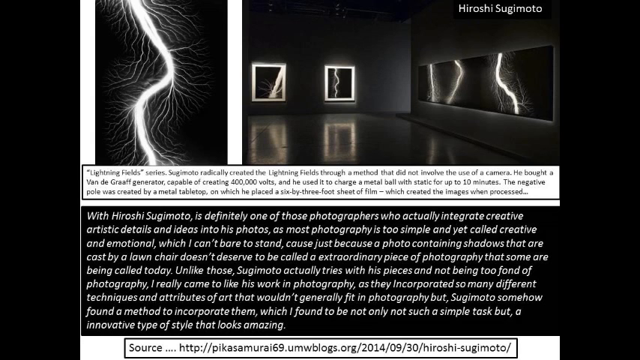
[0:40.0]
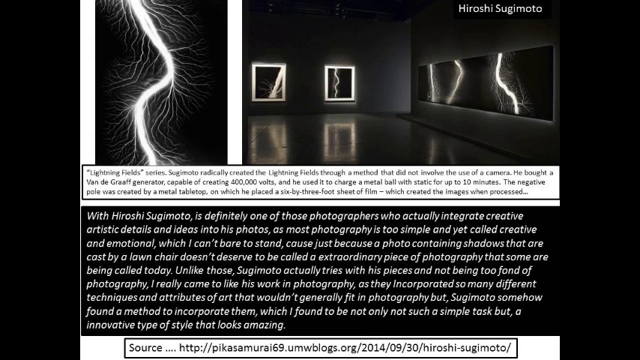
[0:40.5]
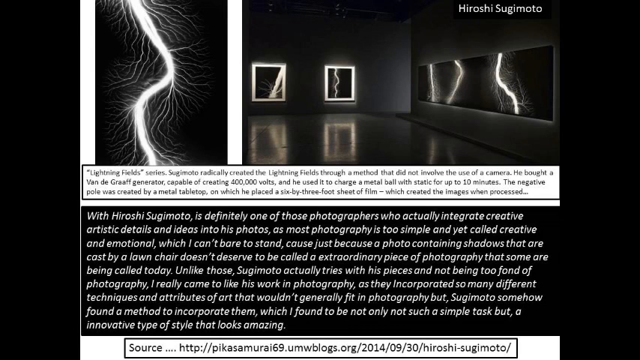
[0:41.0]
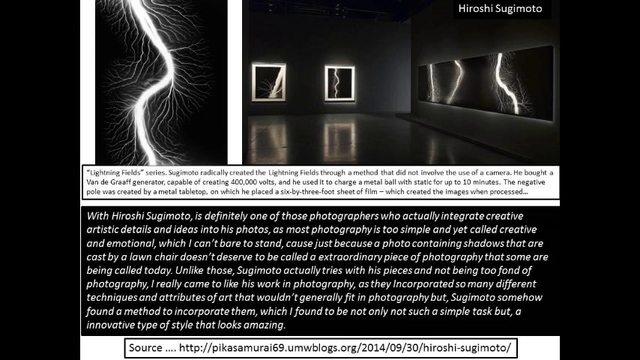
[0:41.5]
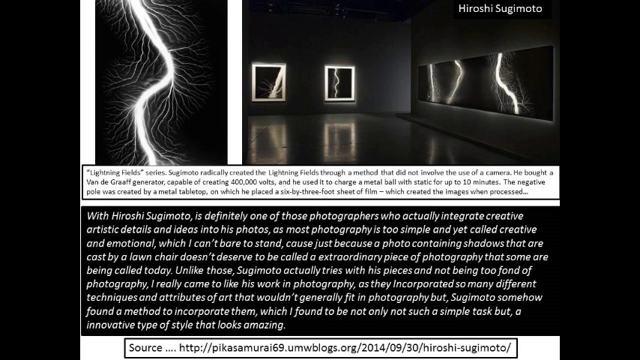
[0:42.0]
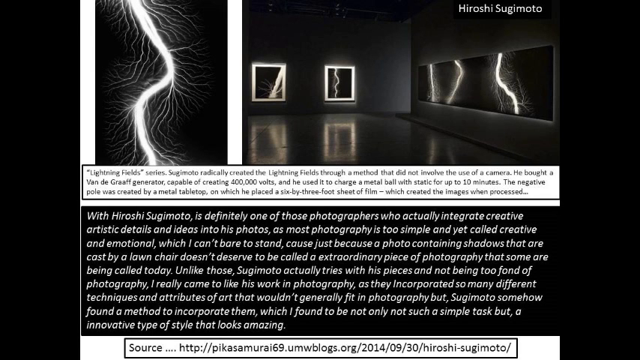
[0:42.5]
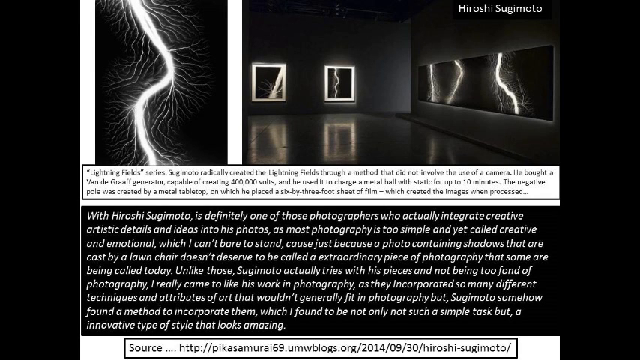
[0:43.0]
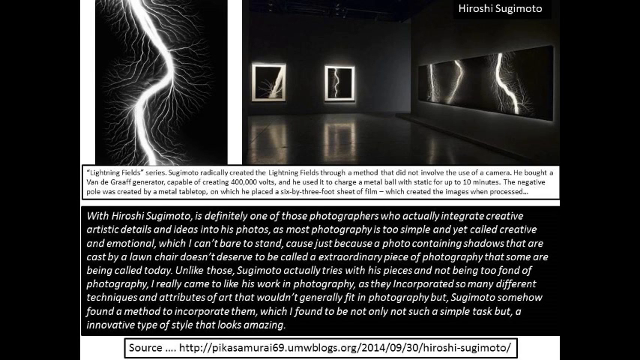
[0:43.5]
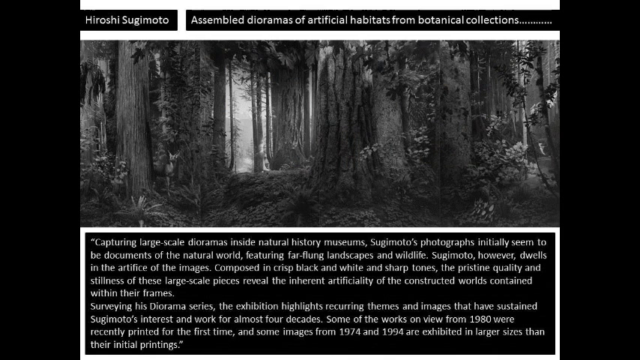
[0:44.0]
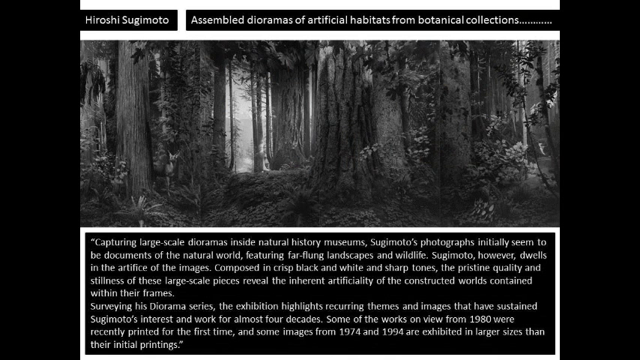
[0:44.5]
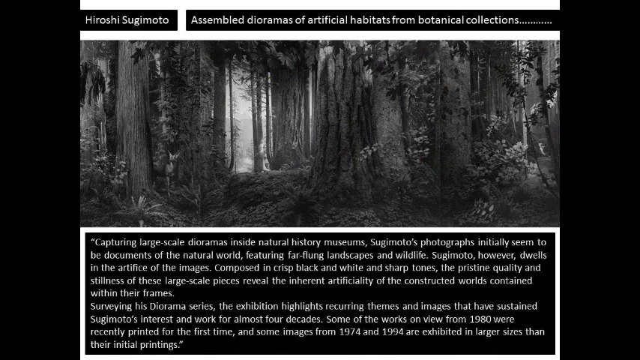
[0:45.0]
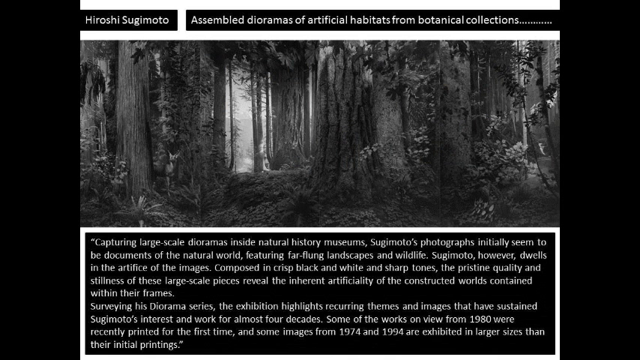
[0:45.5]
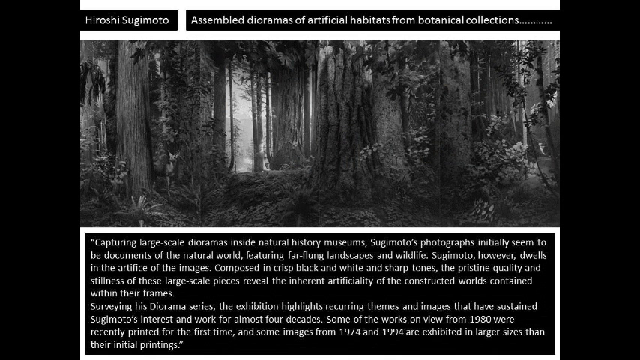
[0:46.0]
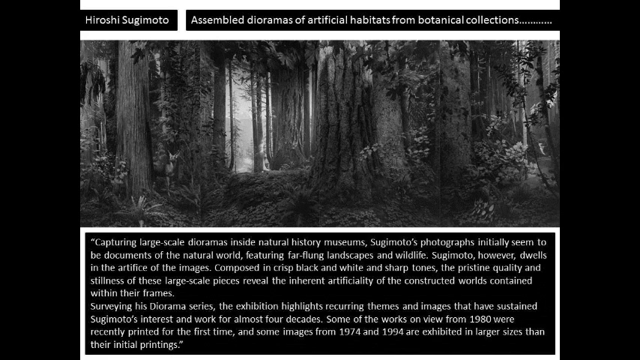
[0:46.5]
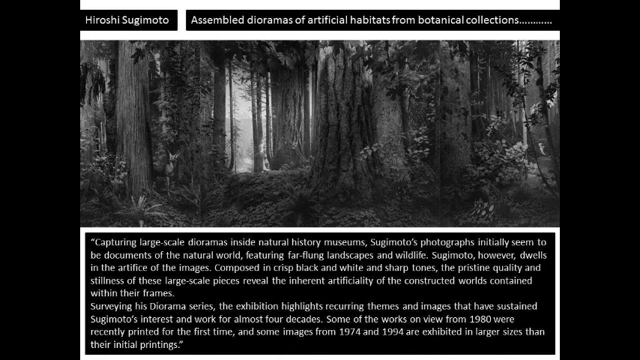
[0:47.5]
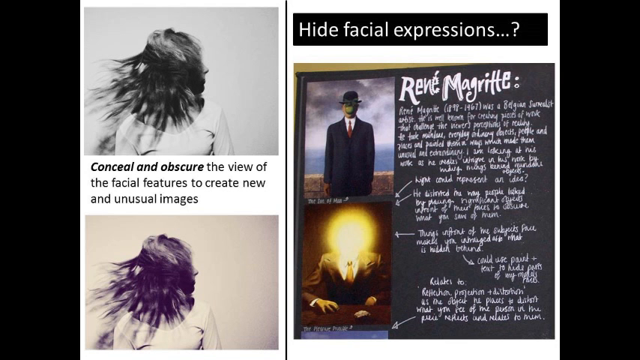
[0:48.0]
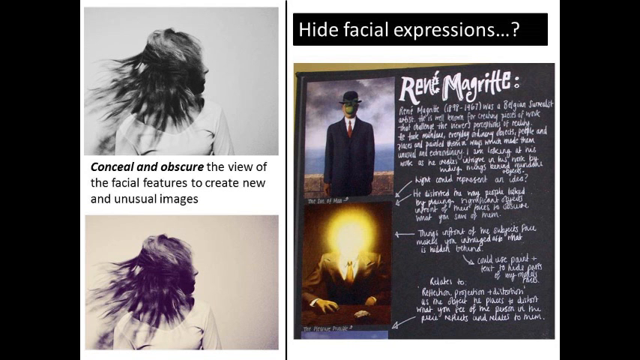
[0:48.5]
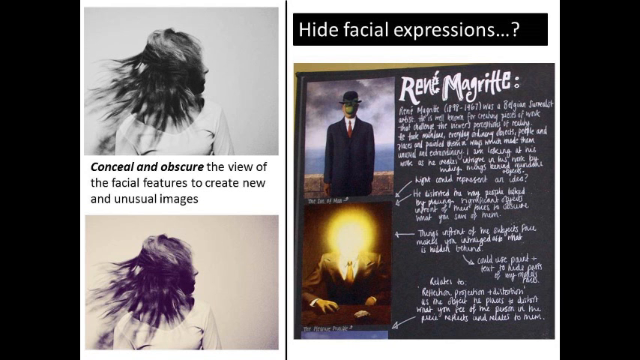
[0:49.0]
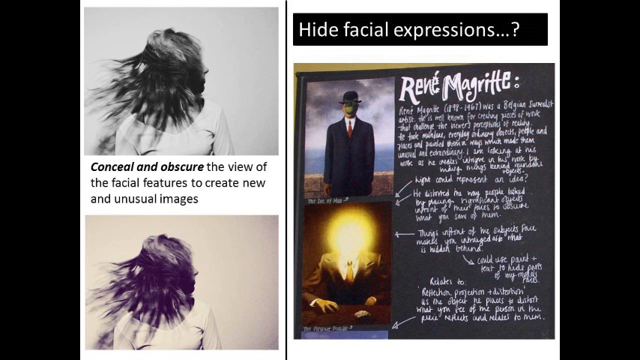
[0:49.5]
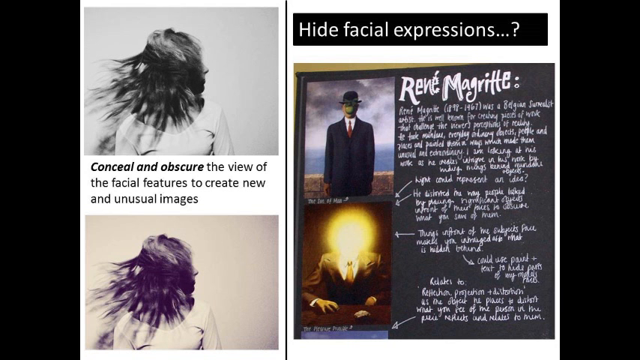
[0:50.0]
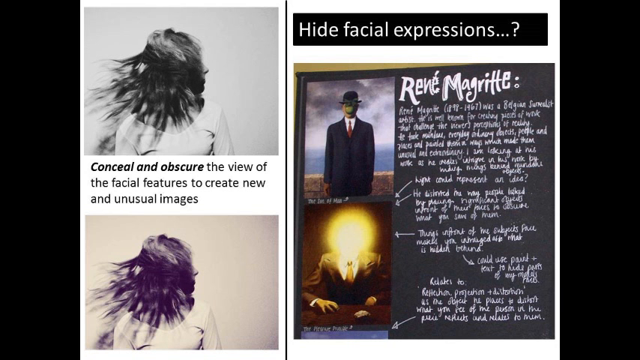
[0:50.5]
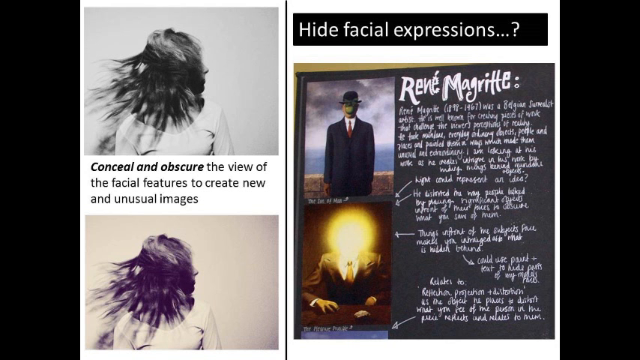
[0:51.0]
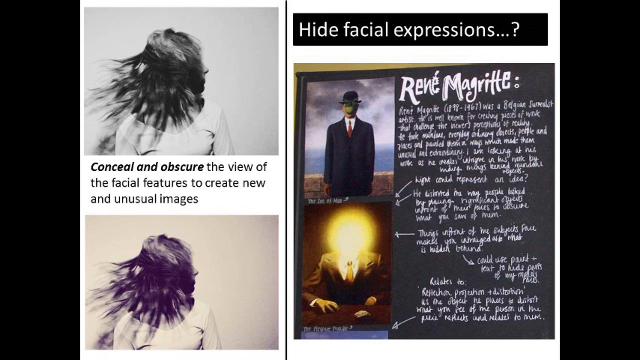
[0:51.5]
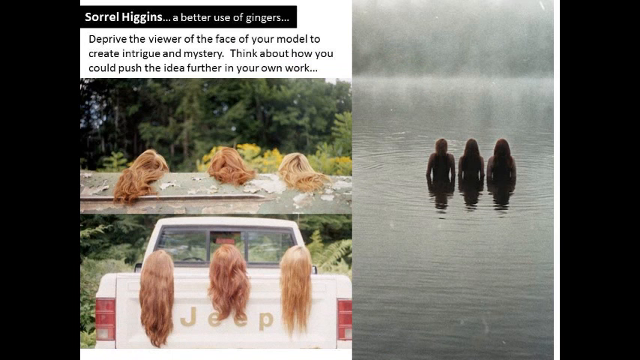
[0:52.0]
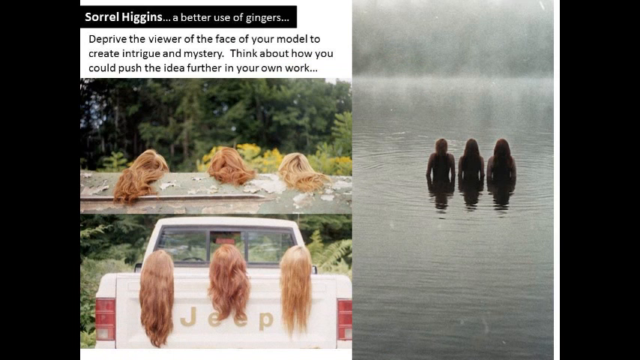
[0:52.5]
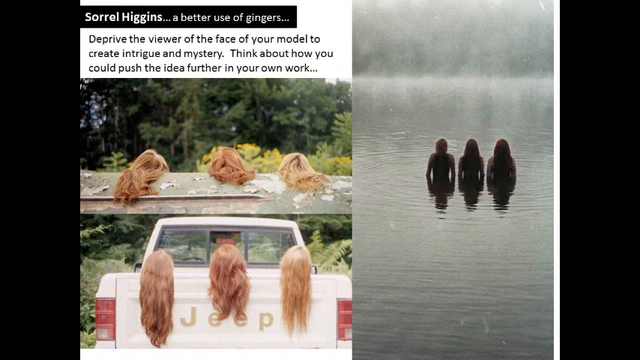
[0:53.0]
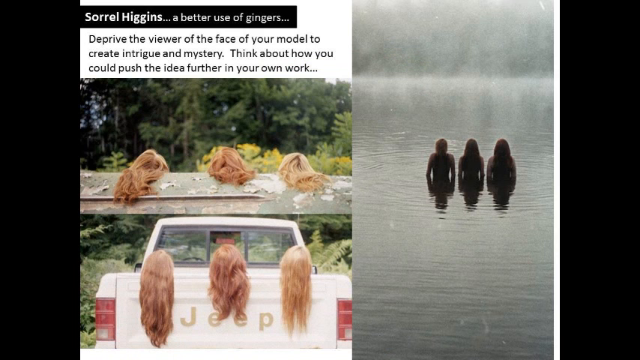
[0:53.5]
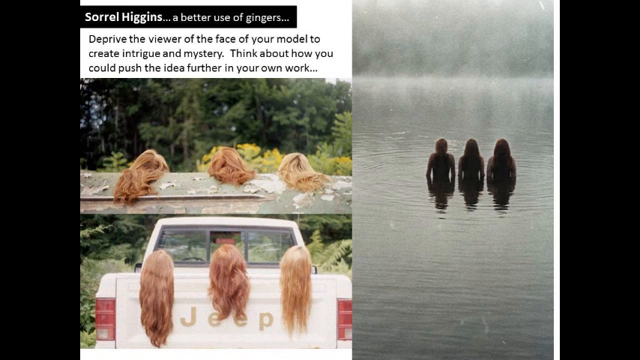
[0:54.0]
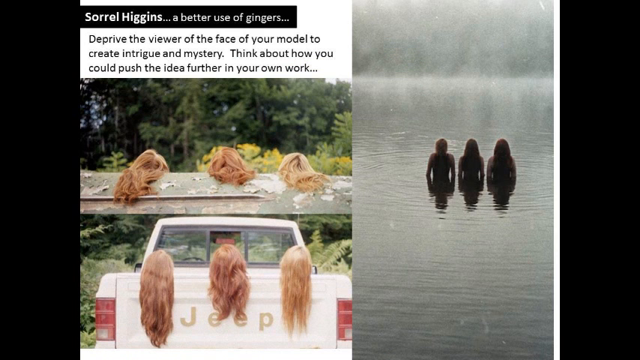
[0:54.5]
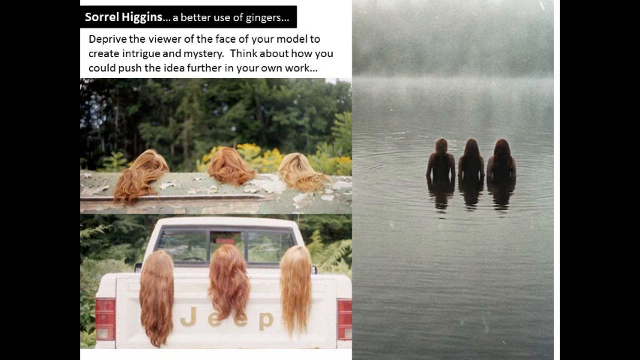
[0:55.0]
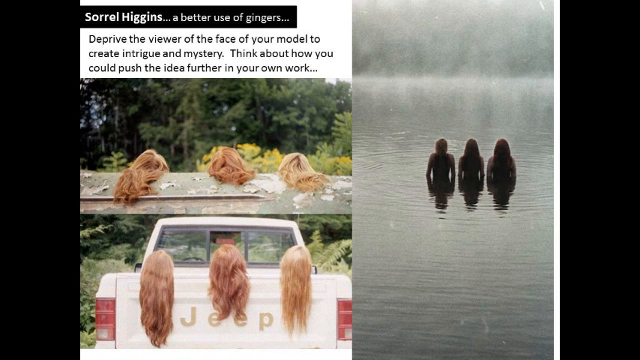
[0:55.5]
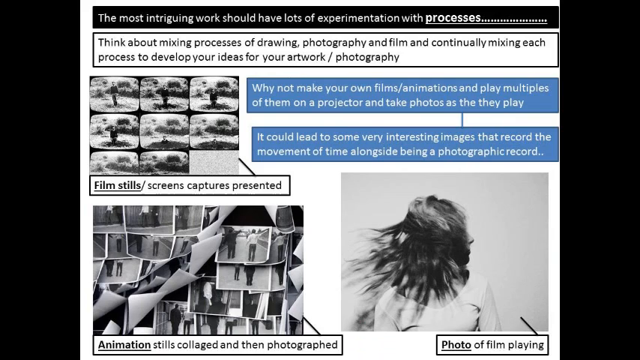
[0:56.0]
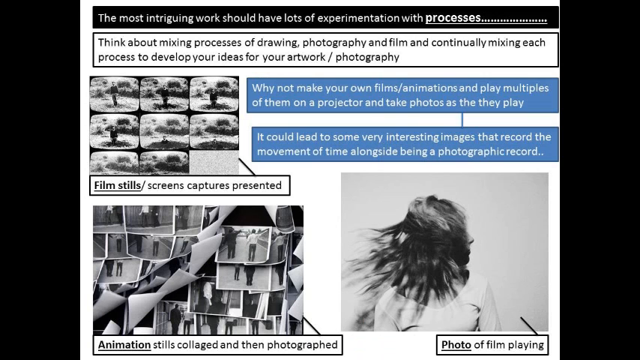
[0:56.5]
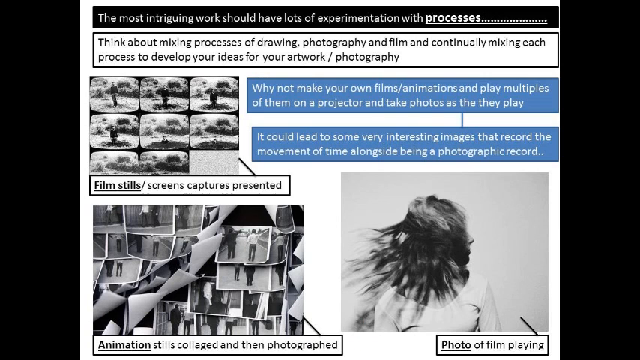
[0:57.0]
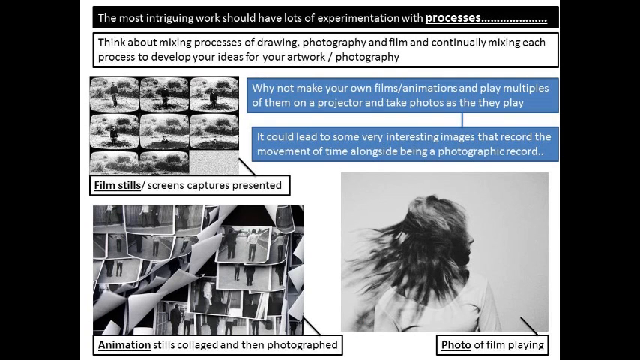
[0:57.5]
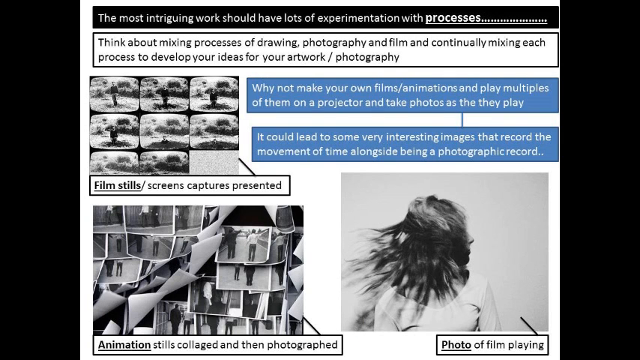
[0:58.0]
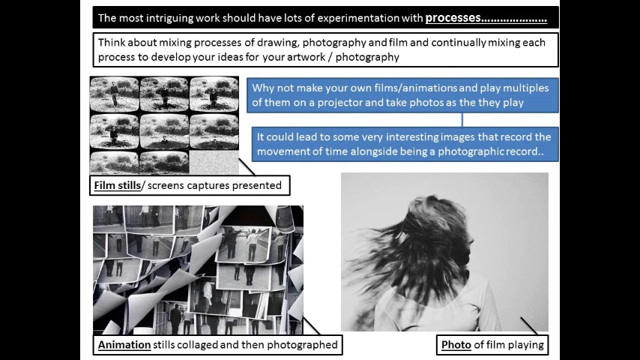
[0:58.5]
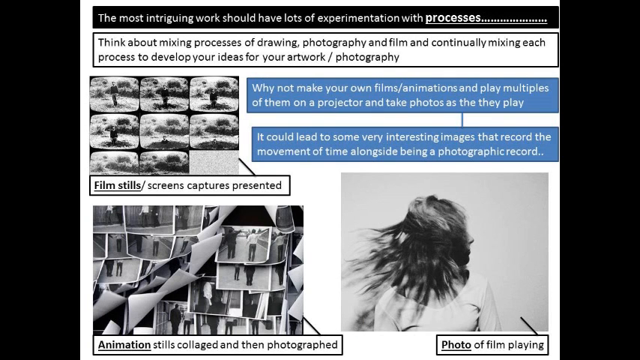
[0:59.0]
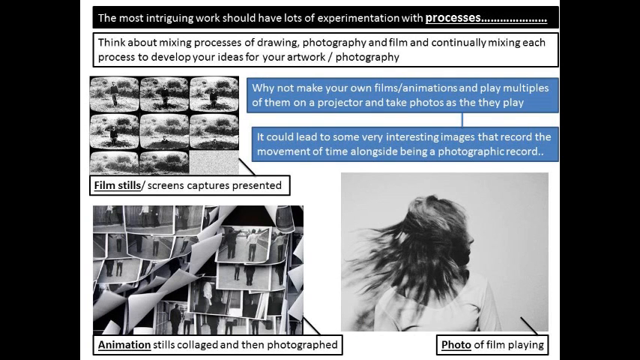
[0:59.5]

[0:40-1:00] Pictures of lightning in black and white by Hiroshi Tsukamoto are placed inside a gallery, with descriptions beside them. Another photo by Hiroshi Tsukamoto shows a forest with many trees. Next, text beginning "conceal and obscure the view of the" and ending "to create new and unusual images" introduces images on the next screen: one is a black and white photo of a woman with her hair thrown in front of her face, and below it is the same photo in a different tone of black and white. Alongside these is a photo by Rene Magritte; another shows a man in a suit, and another a man in a suit with a top hat. The following photos show hair being loaded at the back of a truck, different hairs of blonde hair, and three women in water; the images are dark. The next photo shows a bunch of black and white photographs with a heading at the top.